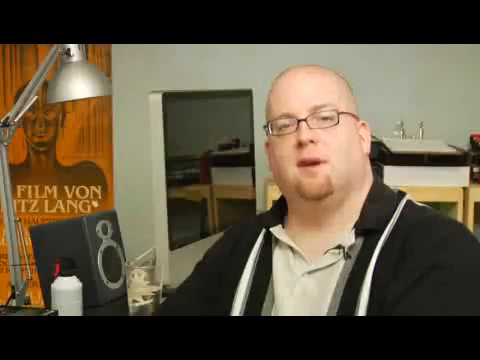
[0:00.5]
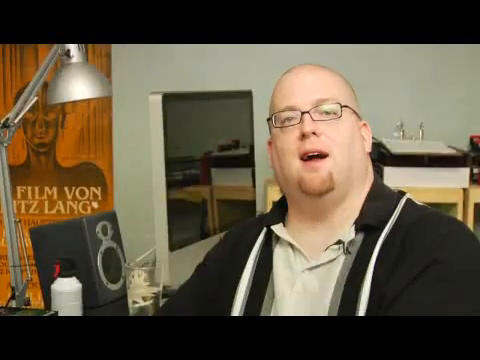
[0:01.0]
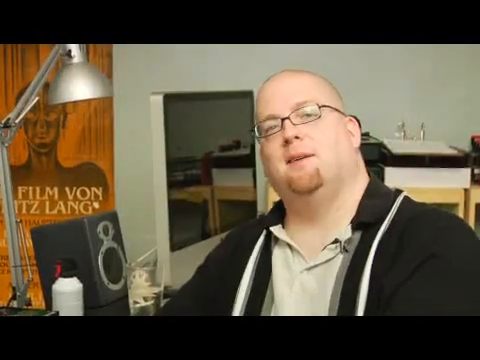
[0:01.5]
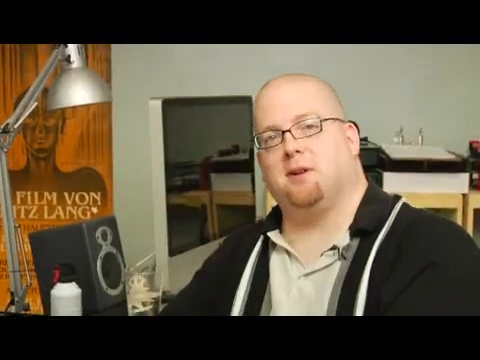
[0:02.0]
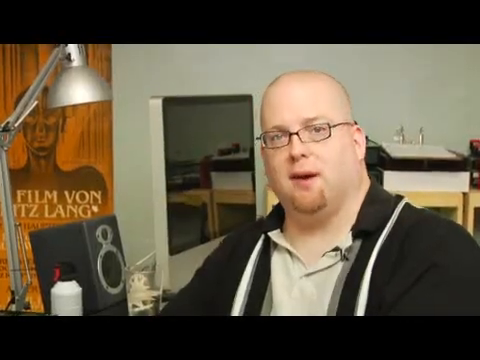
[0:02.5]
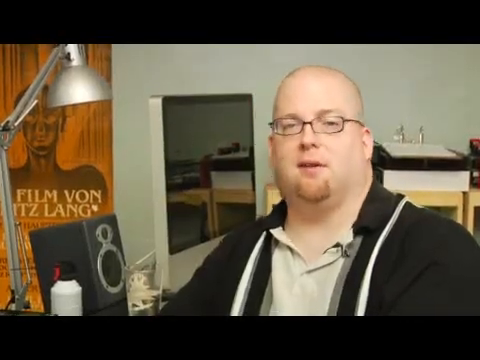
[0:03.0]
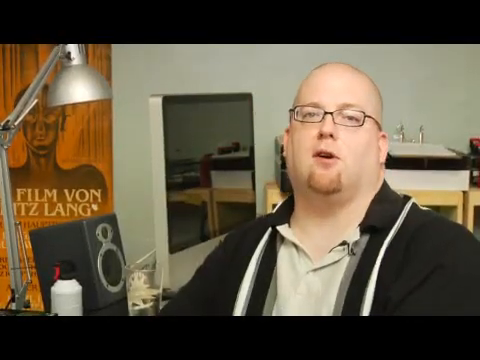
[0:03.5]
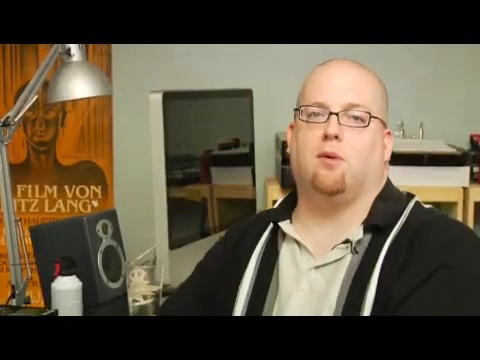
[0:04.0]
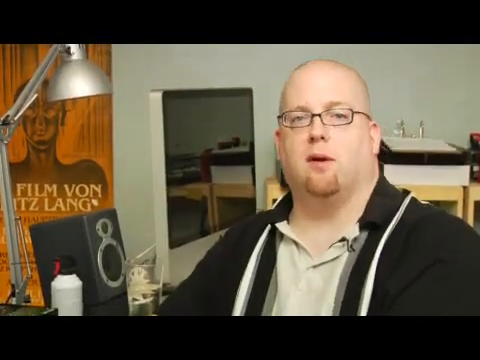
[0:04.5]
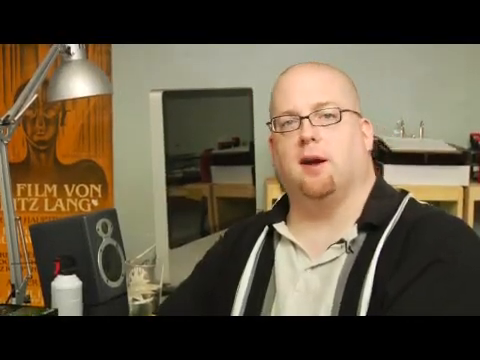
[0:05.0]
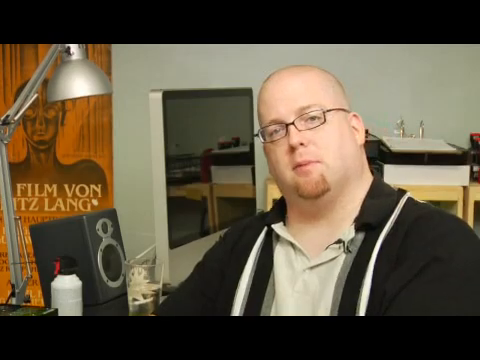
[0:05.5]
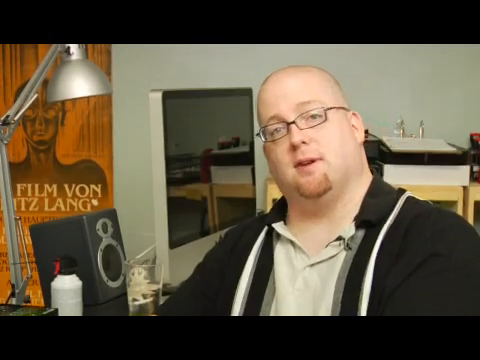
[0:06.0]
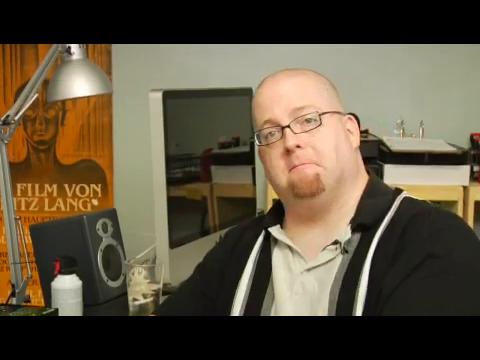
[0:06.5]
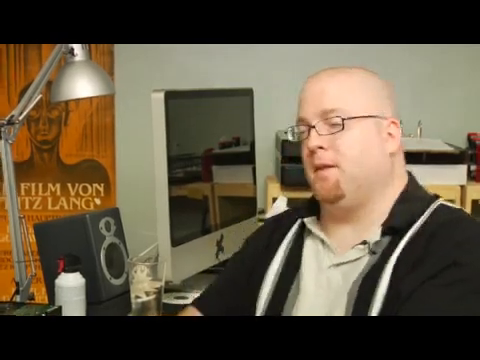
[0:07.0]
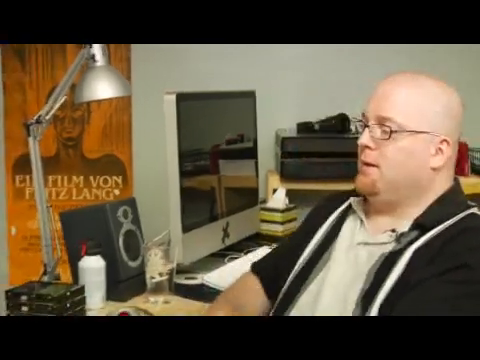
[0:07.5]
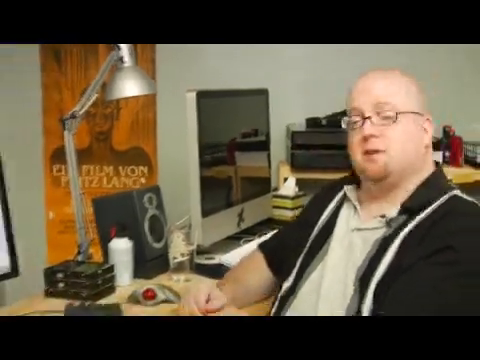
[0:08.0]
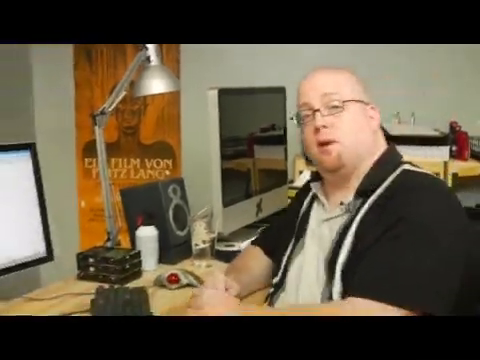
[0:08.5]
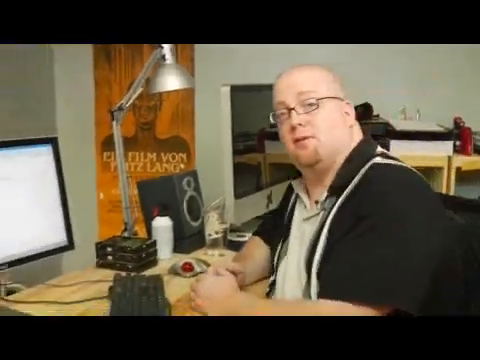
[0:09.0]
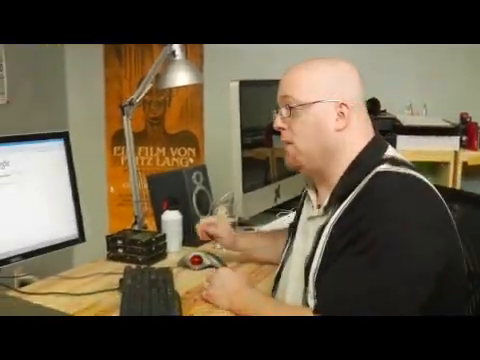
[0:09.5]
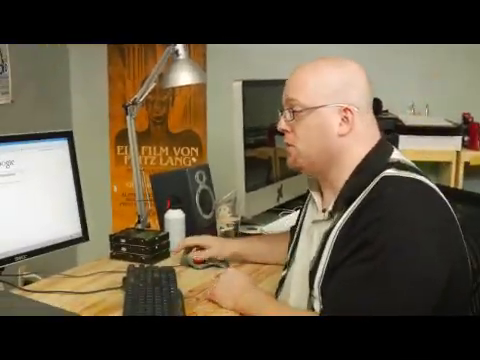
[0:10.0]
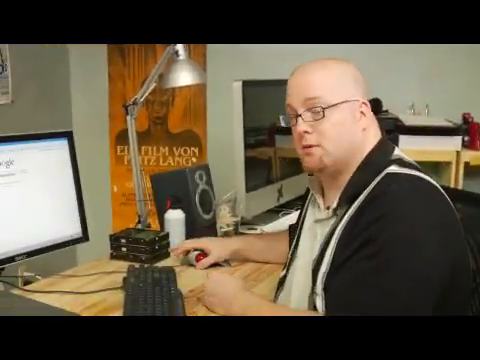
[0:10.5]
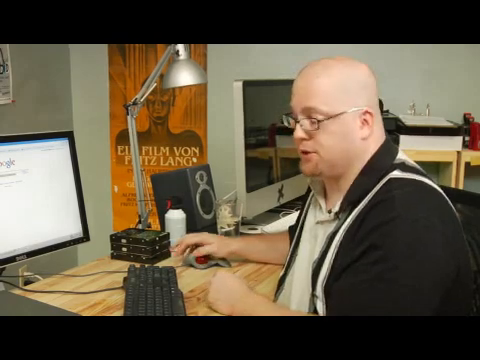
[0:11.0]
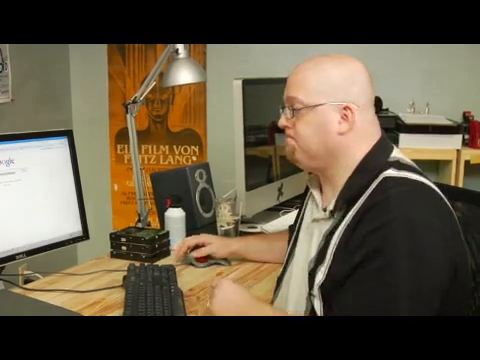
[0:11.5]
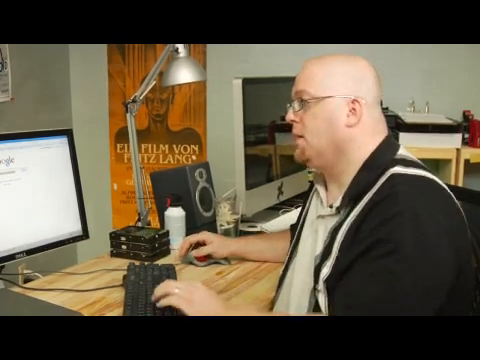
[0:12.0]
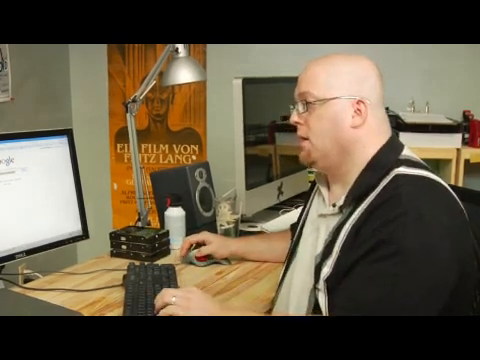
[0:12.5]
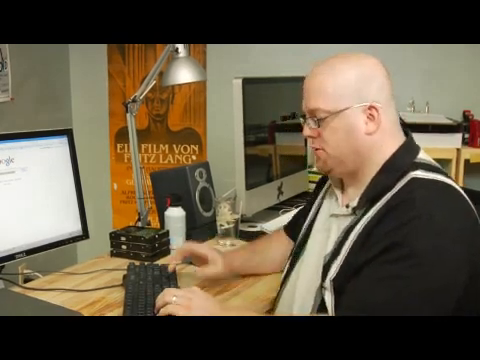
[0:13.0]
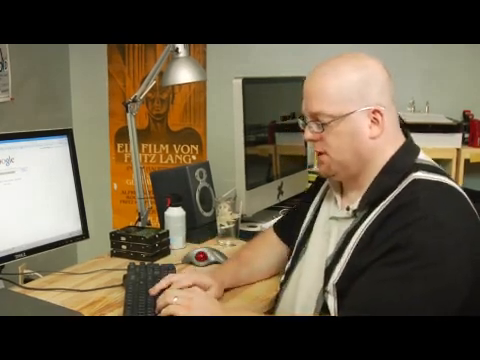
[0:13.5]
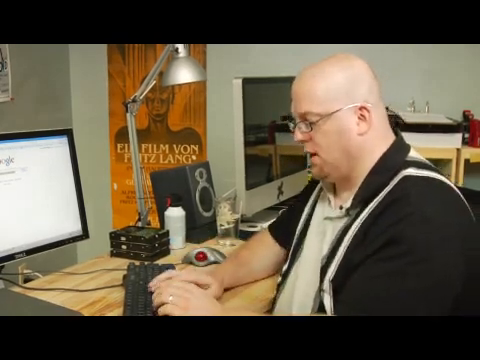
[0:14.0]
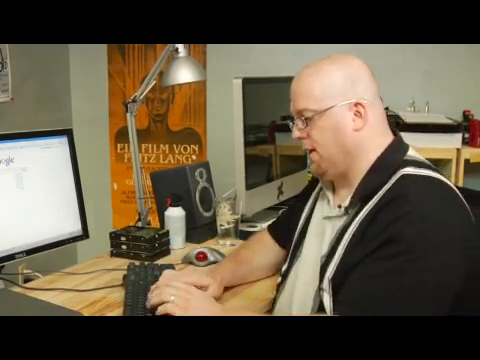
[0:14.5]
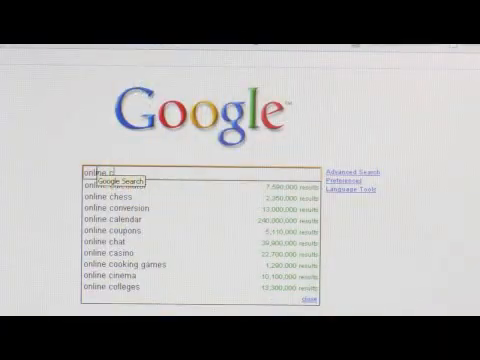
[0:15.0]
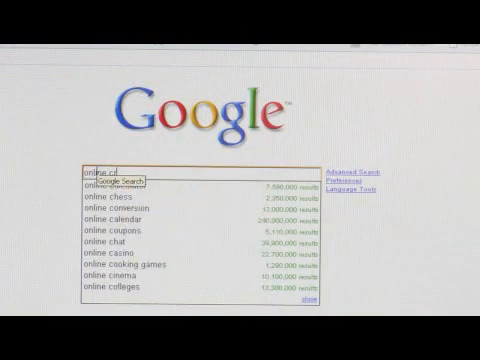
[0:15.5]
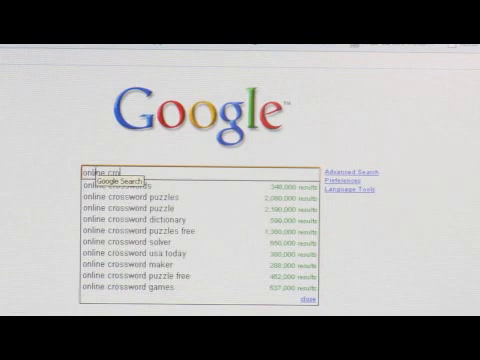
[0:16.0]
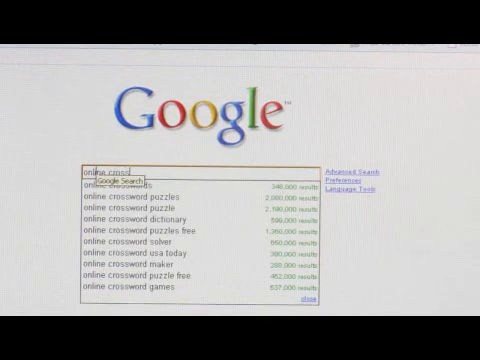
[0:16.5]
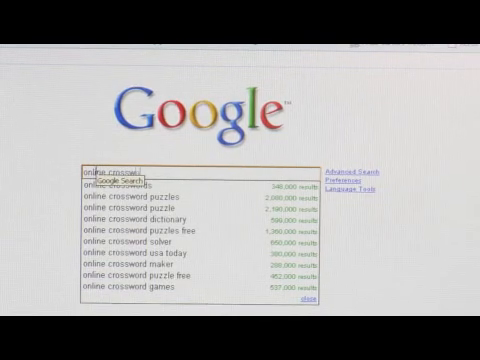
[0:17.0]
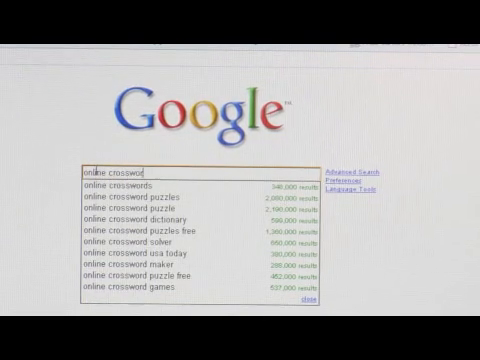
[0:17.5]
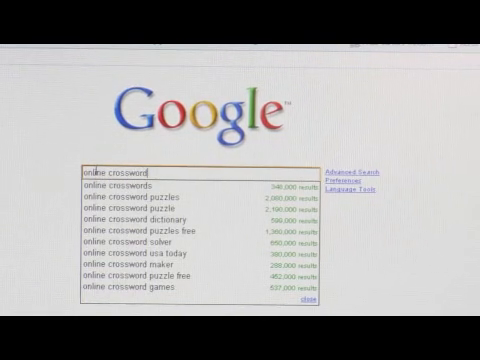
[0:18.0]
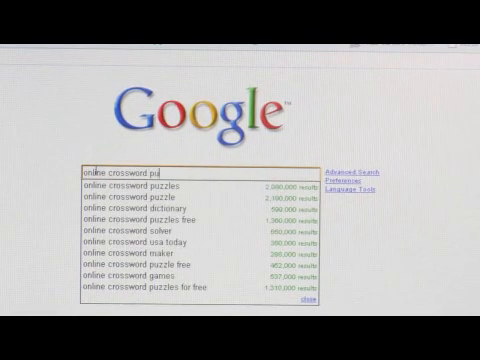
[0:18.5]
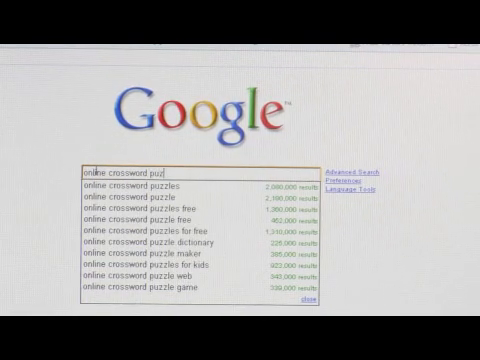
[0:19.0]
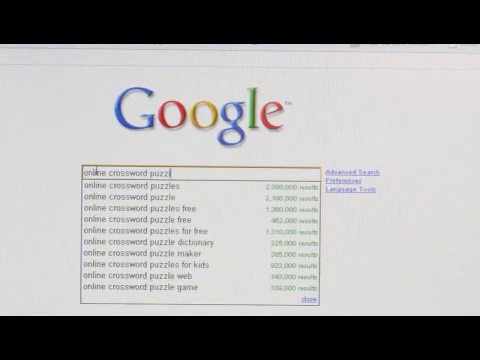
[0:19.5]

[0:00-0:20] A white man who appears to be bald wears glasses, a beige-looking shirt and a black jacket over it; he is a bit overweight. The setting seems to be some sort of room. In the back are a lamp, a speaker and what is presumably a screen; the screen is off, so a reflection can be seen on it. A poster in the back says "Film Von Lang", with some of its words cut off by the lamp blocking it. The camera zooms out, and the man is looking at another computer screen showing Google. He begins to type, and the text reads "online crossword puzzle". He uses a gray mouse, and to the left of the mouse is a red ball, apparently serving as a trackpad of sorts. His keyboard is black and wired, connected directly to the computer.